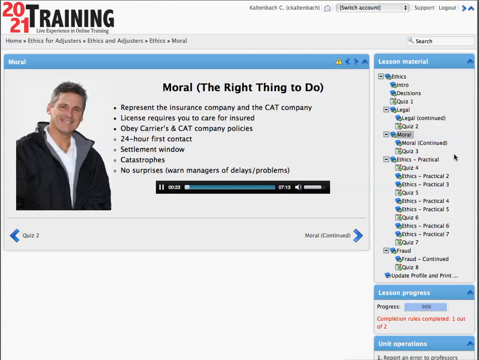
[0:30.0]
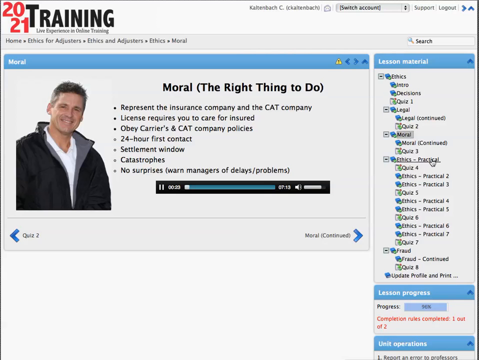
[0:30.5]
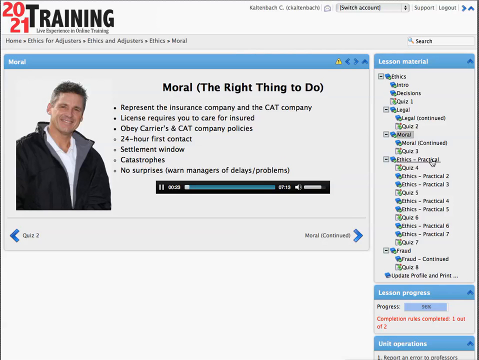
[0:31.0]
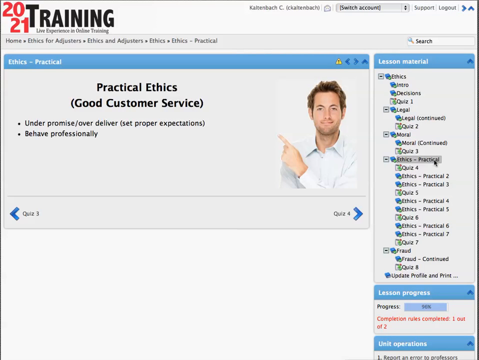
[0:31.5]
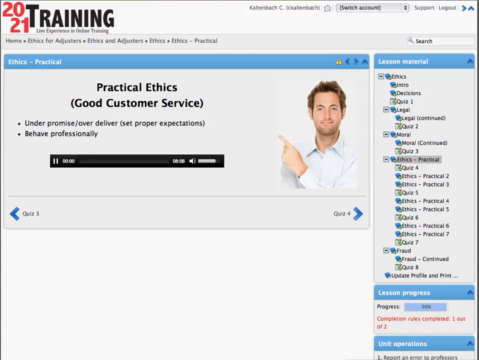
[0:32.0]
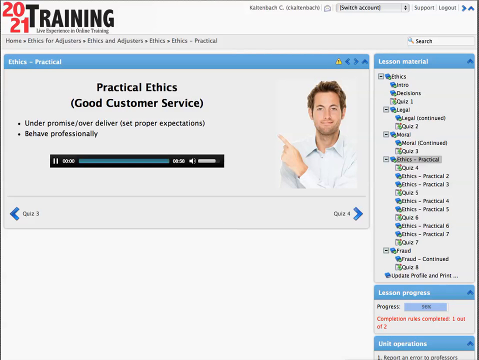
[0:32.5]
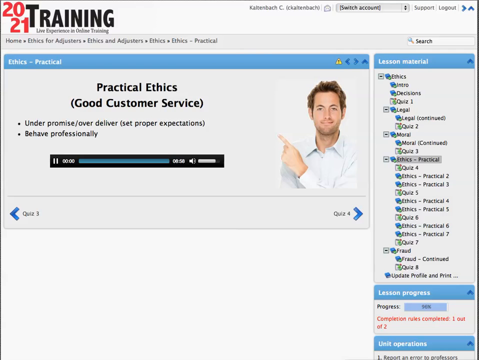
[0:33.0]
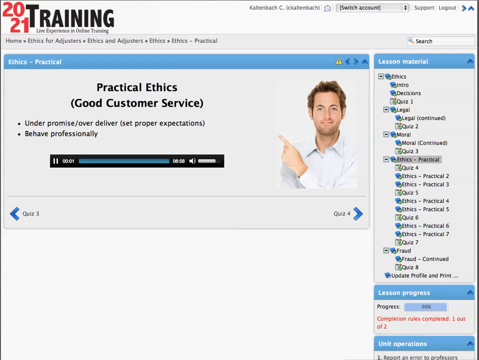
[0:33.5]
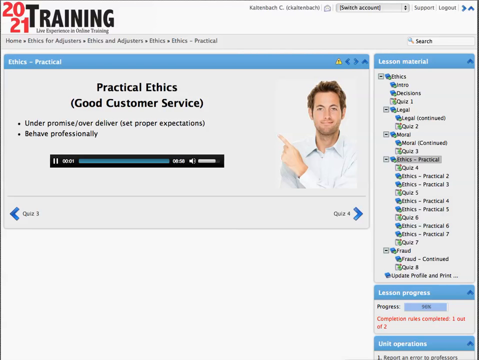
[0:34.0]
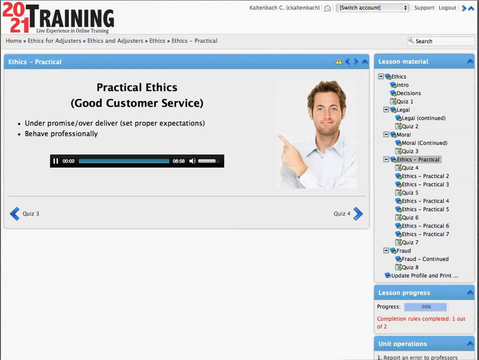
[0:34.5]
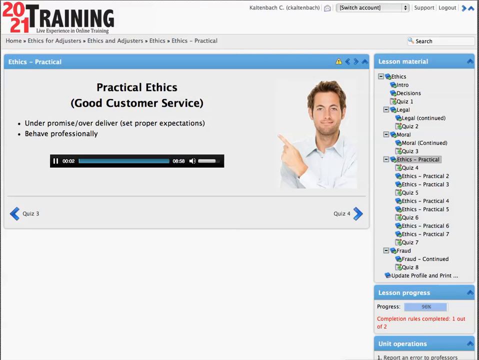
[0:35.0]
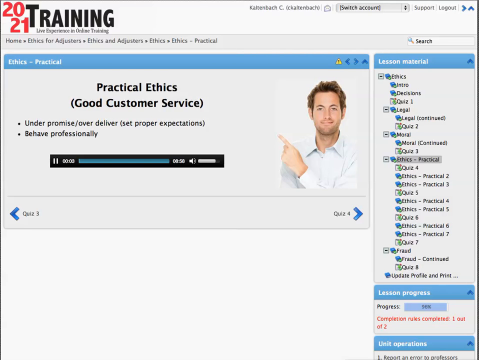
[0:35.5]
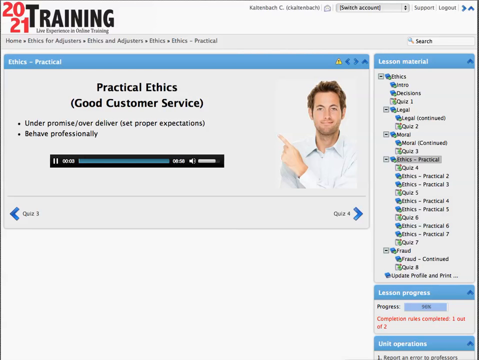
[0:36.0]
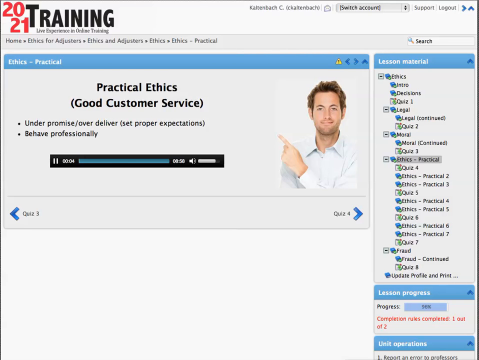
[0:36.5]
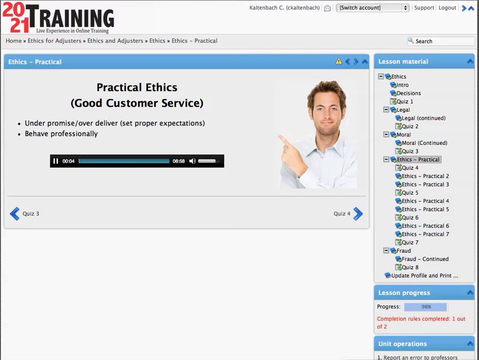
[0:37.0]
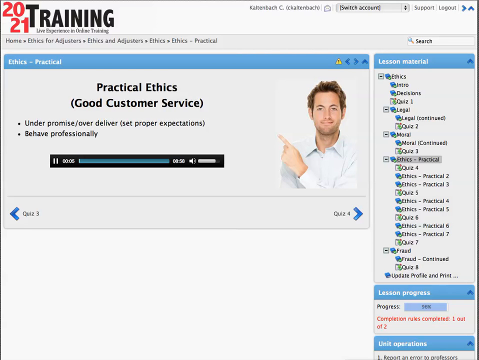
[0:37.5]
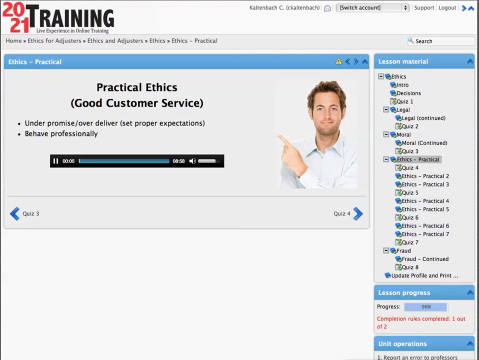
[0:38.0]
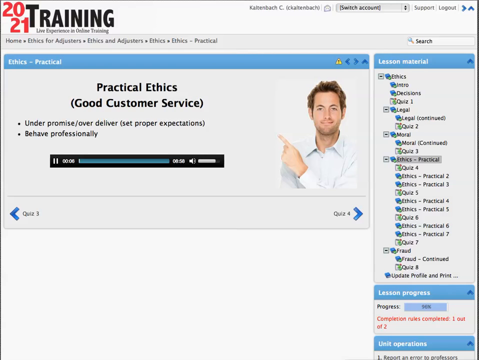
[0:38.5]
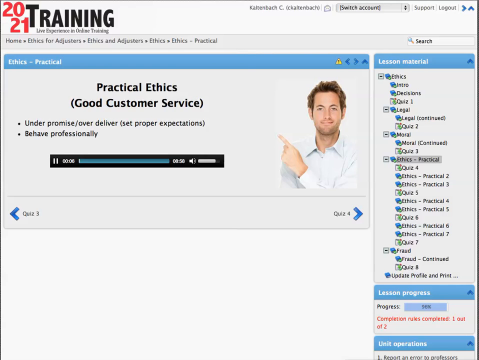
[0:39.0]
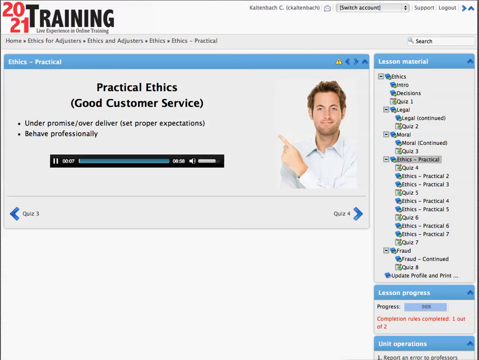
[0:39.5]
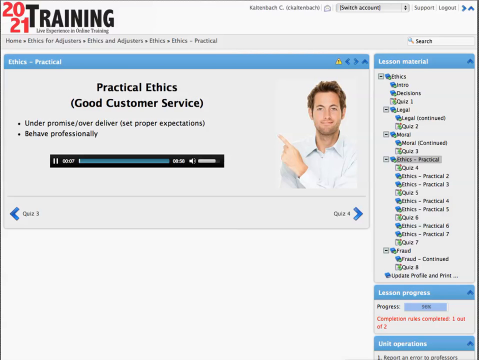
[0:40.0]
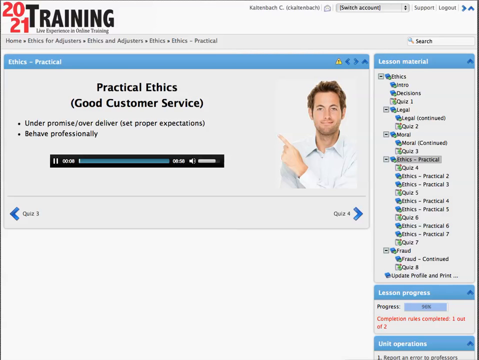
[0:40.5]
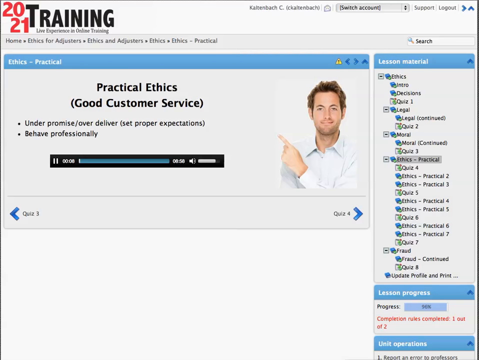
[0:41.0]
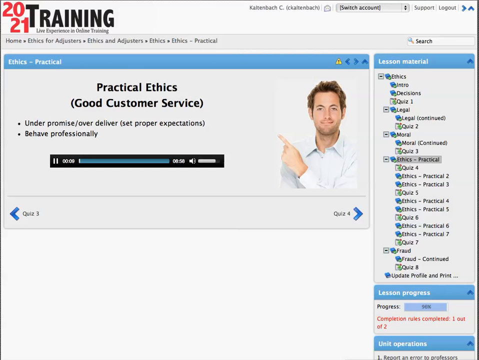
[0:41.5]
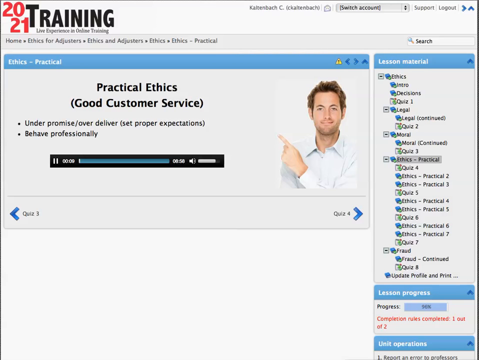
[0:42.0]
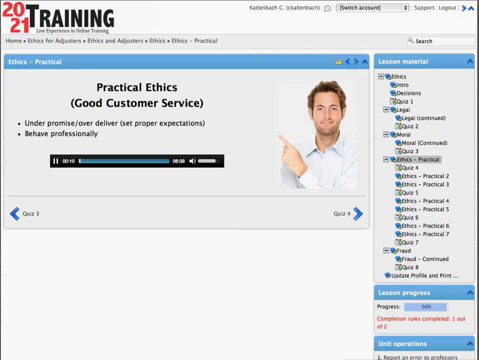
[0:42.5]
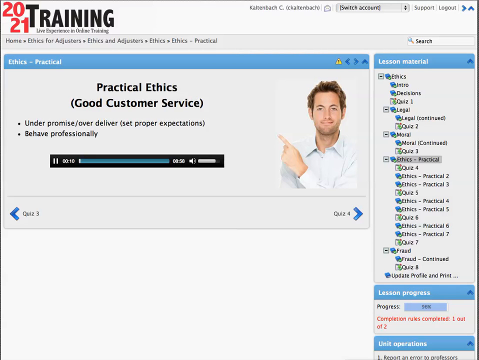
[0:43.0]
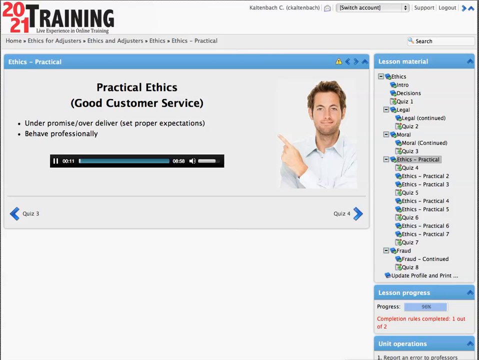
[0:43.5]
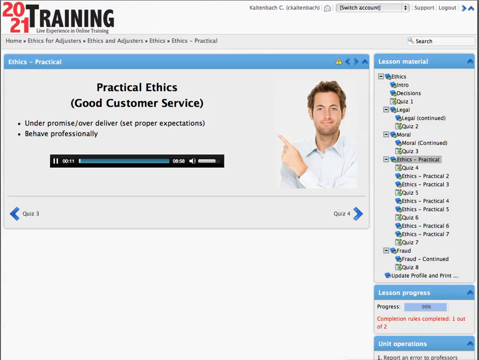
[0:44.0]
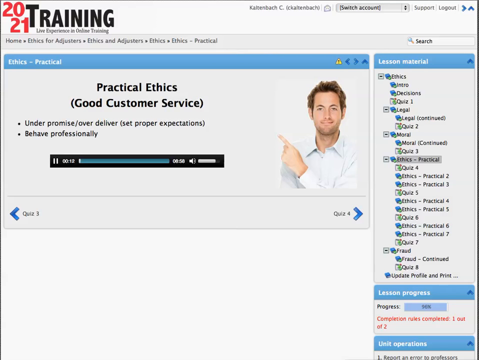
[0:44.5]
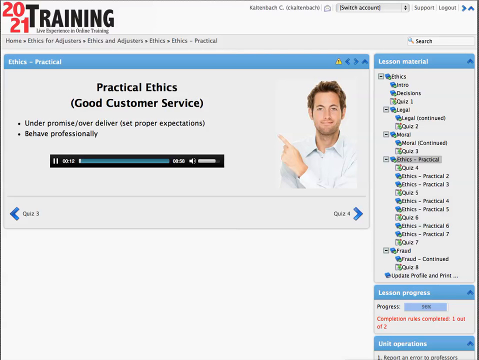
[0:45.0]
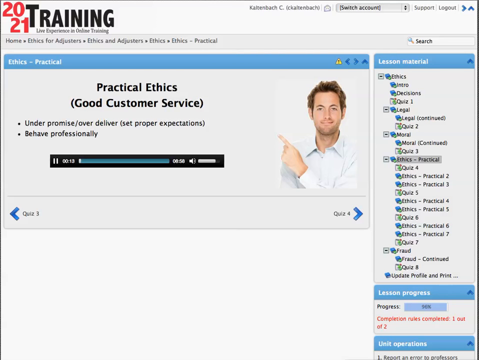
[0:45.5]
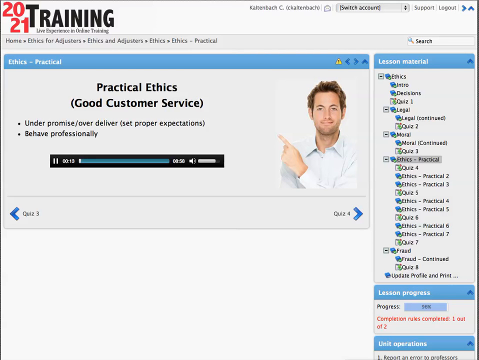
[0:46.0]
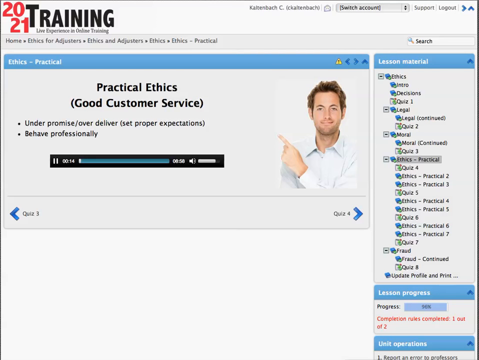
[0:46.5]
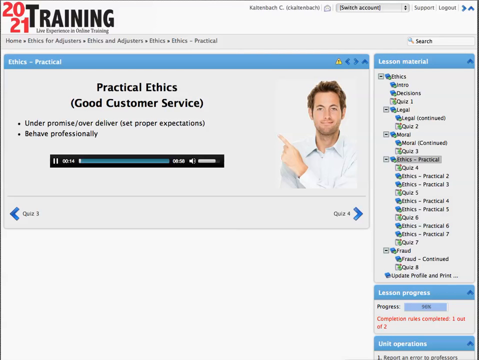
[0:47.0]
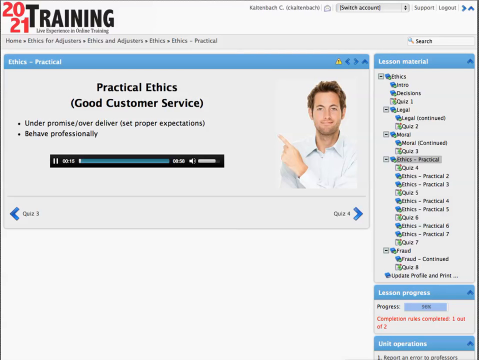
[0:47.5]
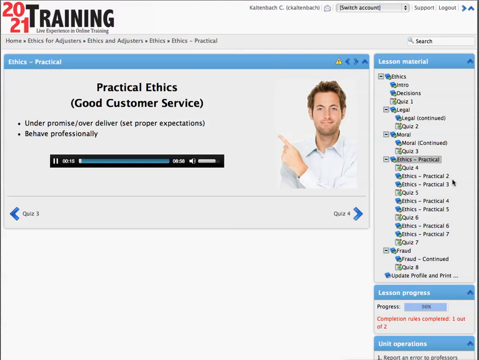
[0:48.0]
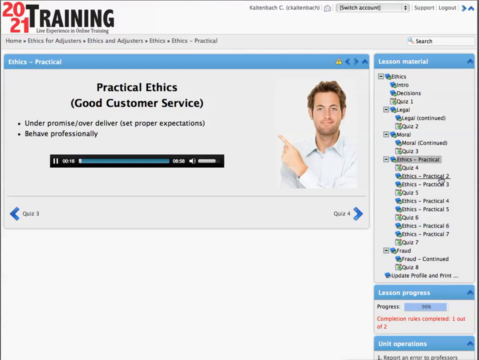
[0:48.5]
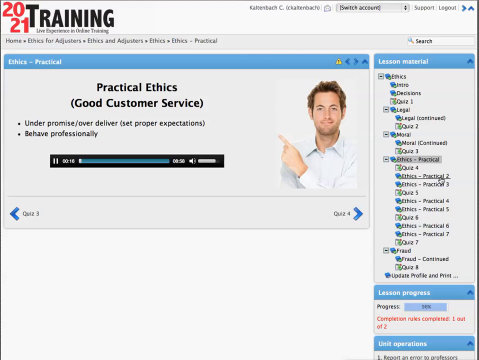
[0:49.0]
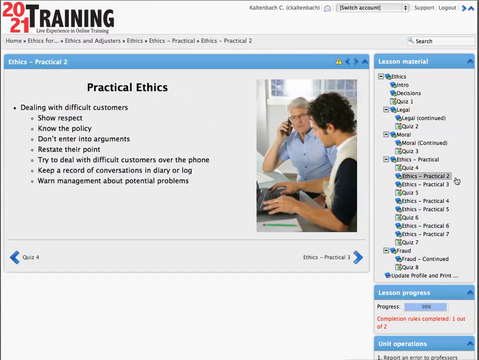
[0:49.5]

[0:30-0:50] The cursor clicks on "Ethics-Practical", which is under "Lesson Material". A screen titled "Practical Ethics" with "(Good Customer Service)" in brackets appears. It has two bullets: "Under promise or over deliver (set proper expectations)" and "behave professionally". On the right-hand side there is a white man who looks to be in his mid-thirties, wearing a white shirt, with his index finger pointing toward the title. The audio starts to play; it appears to be fifty-something seconds long, but the numbers are not clear. The cursor then moves to "Ethics-Practical 2", which is underneath "Ethics-Practical", and clicks it. Another screen appears, showing text with the title "Practical Ethics".